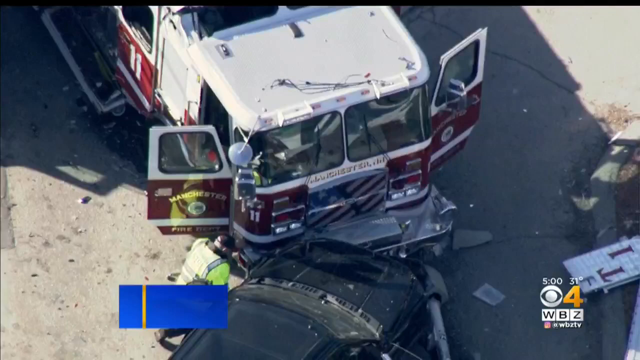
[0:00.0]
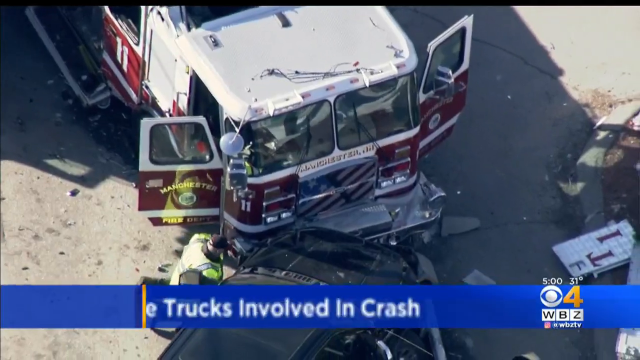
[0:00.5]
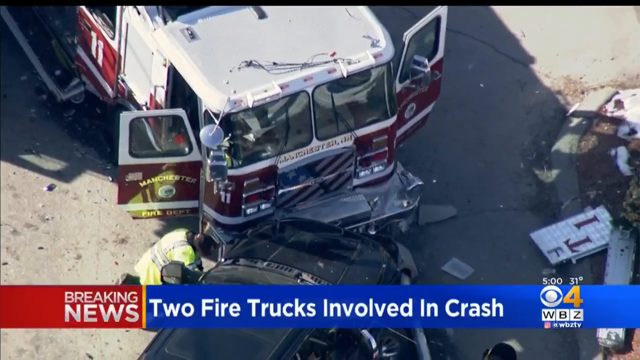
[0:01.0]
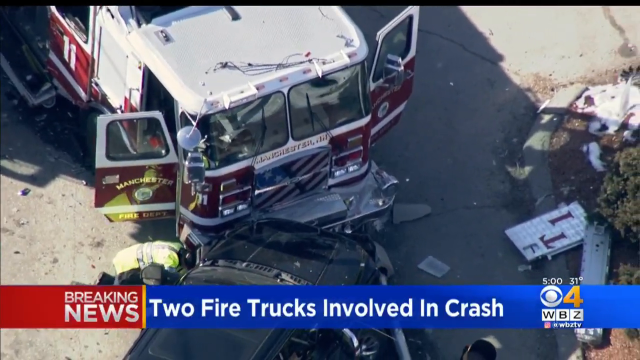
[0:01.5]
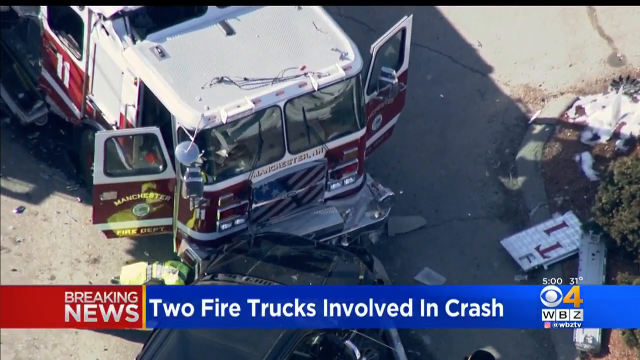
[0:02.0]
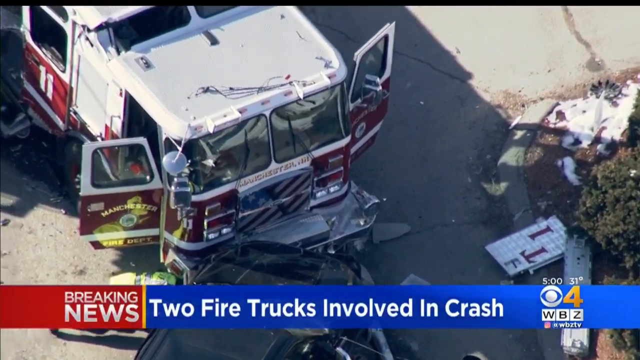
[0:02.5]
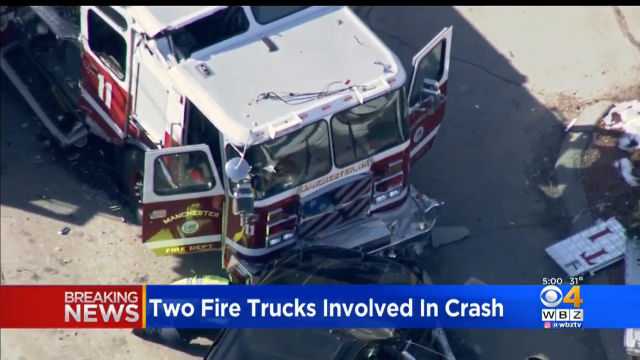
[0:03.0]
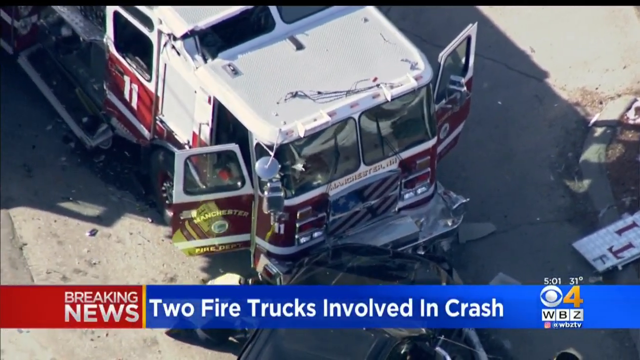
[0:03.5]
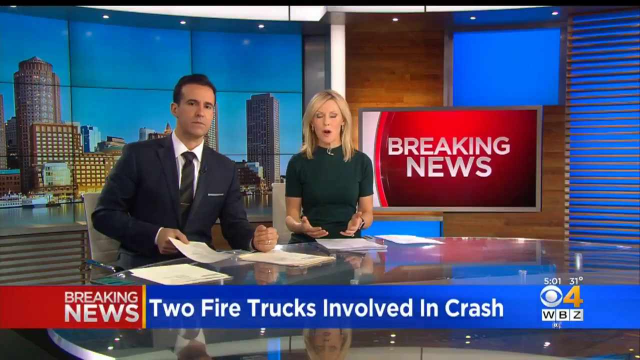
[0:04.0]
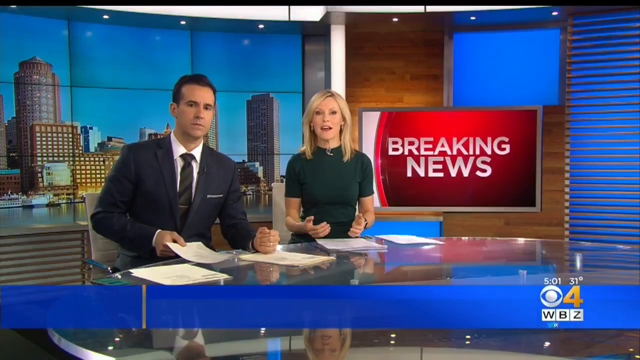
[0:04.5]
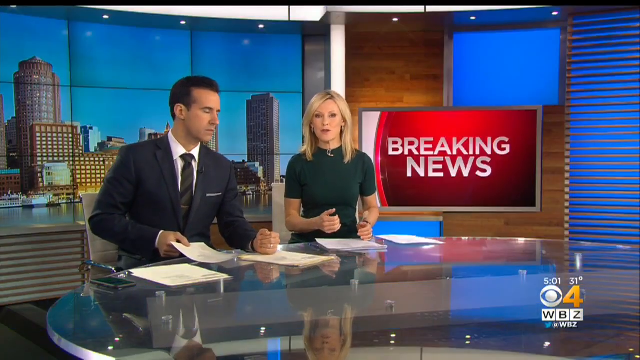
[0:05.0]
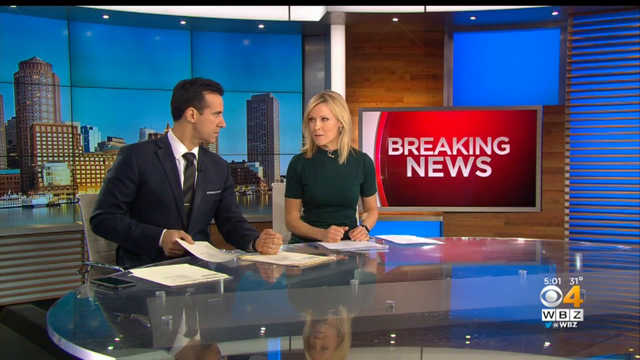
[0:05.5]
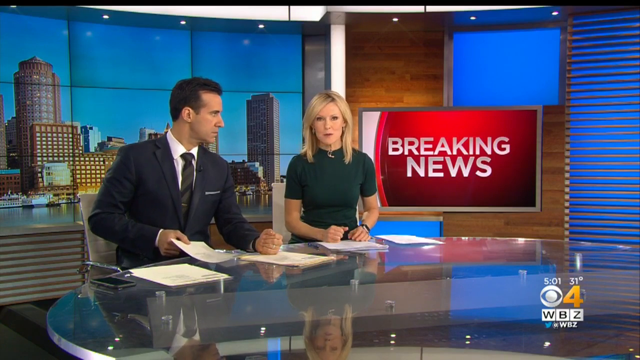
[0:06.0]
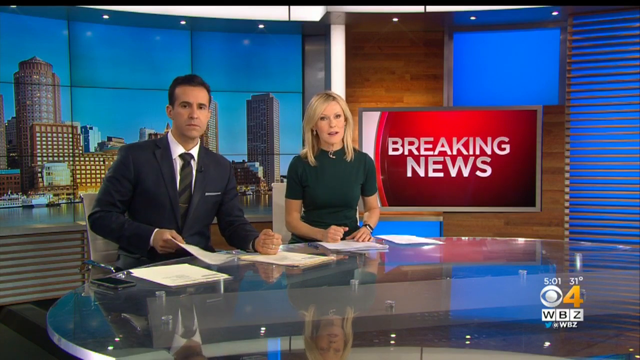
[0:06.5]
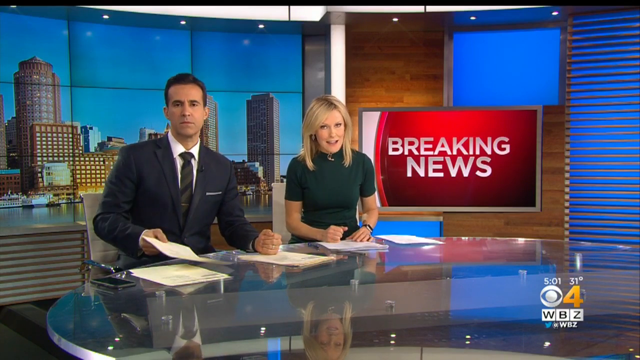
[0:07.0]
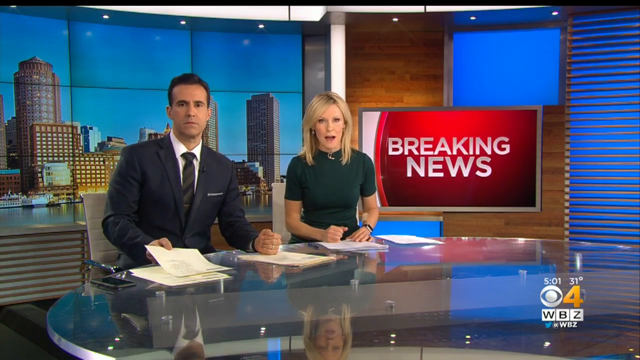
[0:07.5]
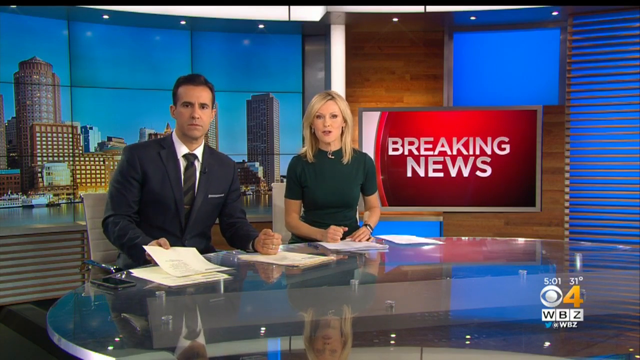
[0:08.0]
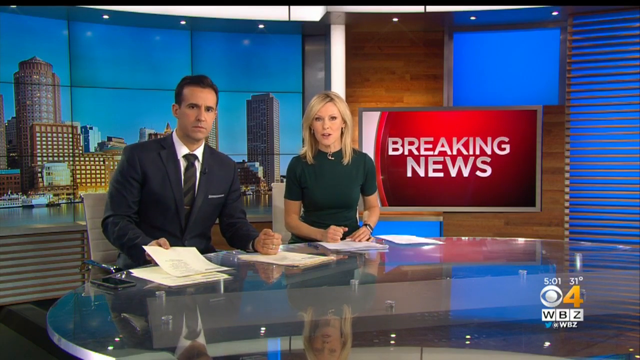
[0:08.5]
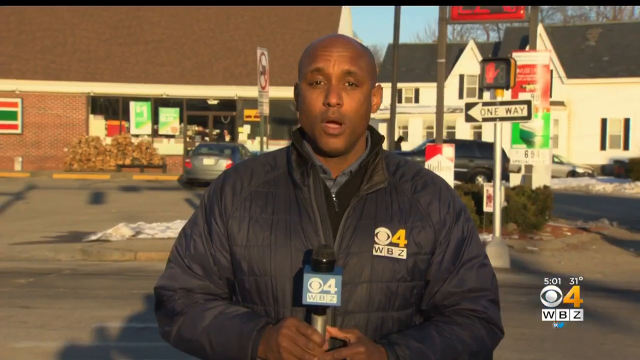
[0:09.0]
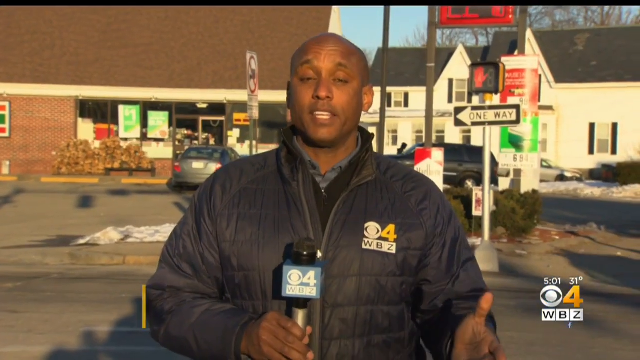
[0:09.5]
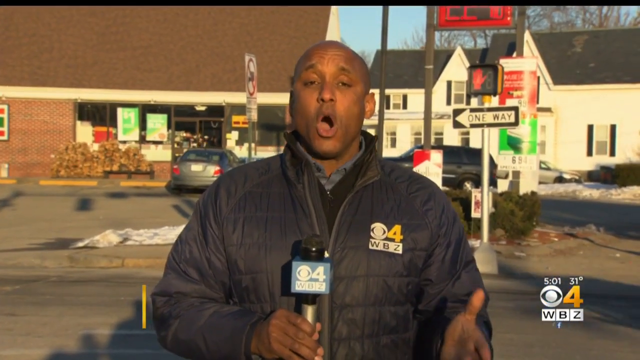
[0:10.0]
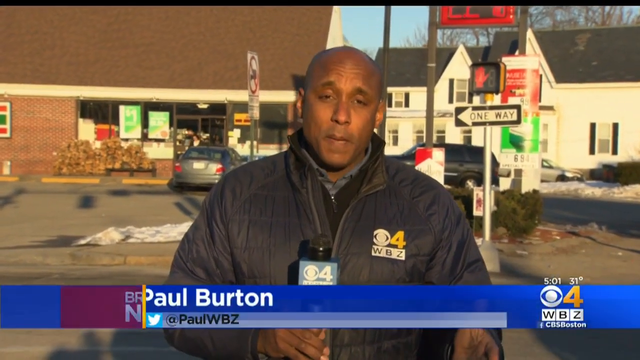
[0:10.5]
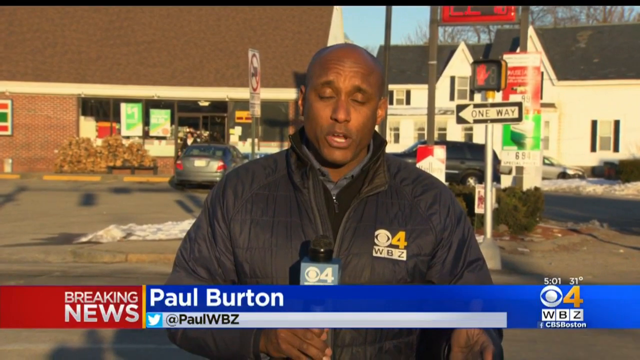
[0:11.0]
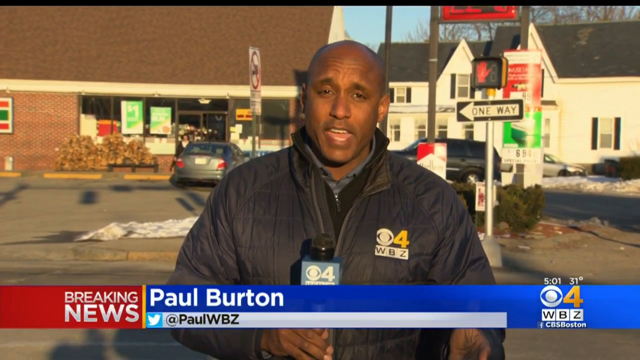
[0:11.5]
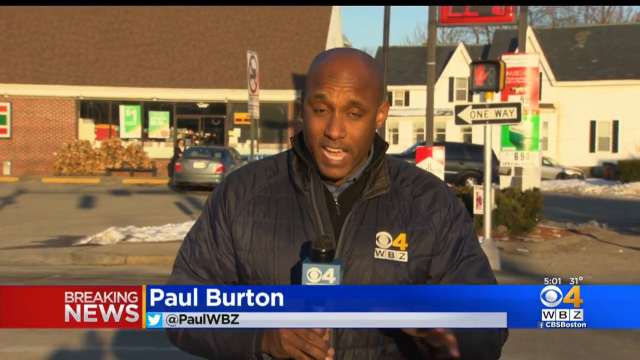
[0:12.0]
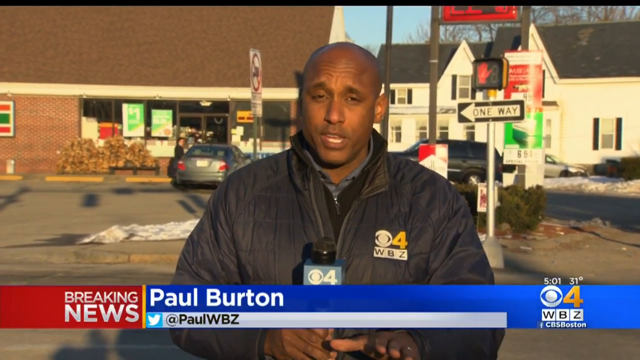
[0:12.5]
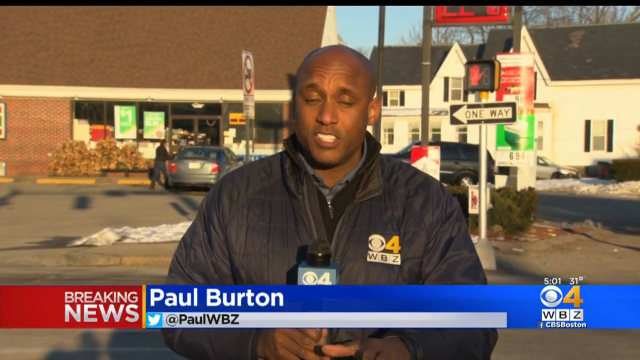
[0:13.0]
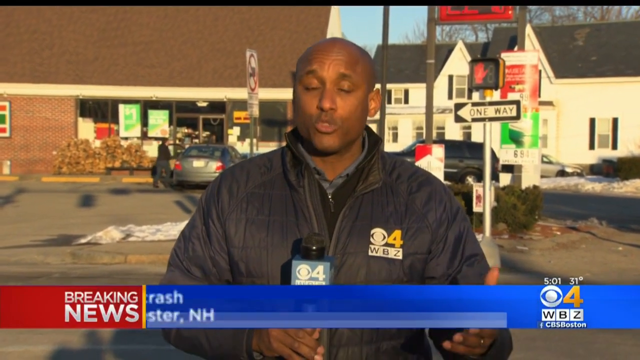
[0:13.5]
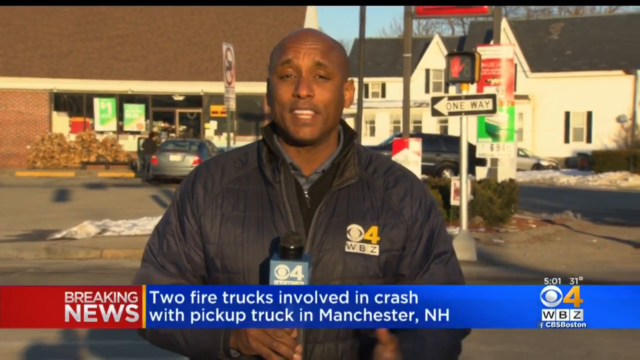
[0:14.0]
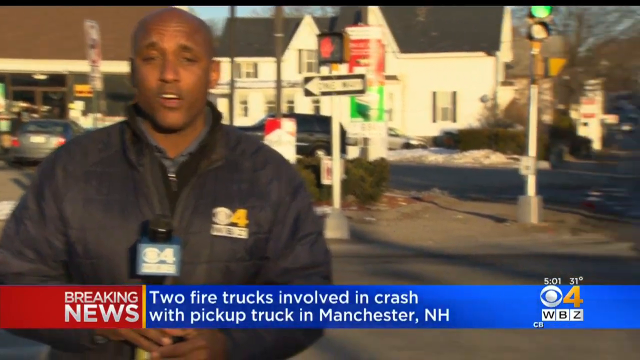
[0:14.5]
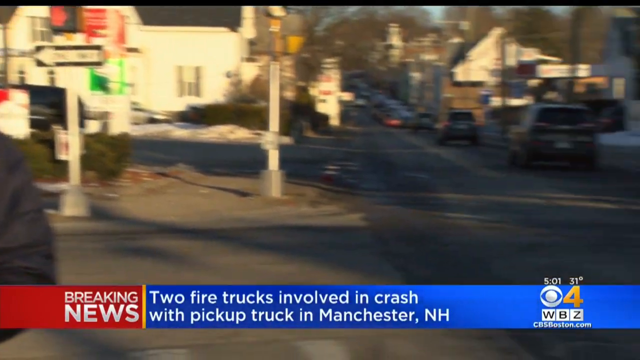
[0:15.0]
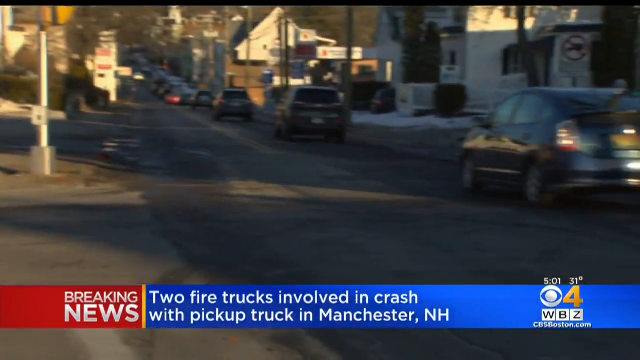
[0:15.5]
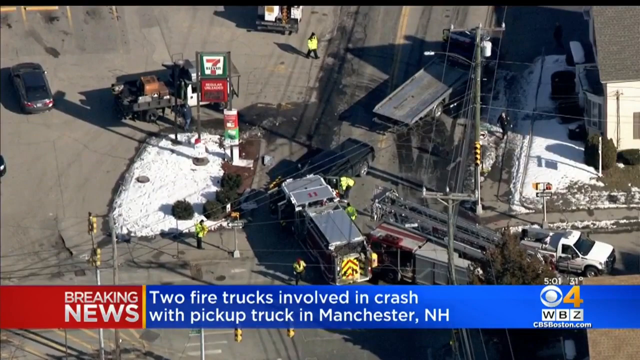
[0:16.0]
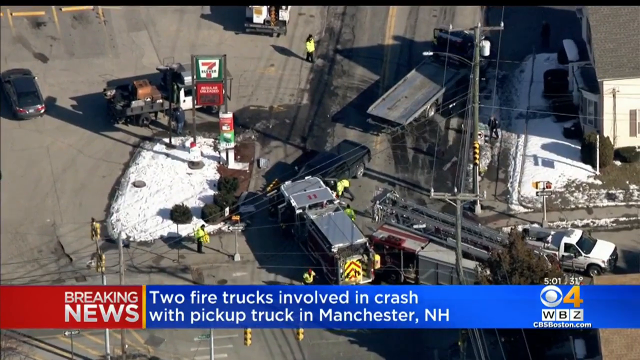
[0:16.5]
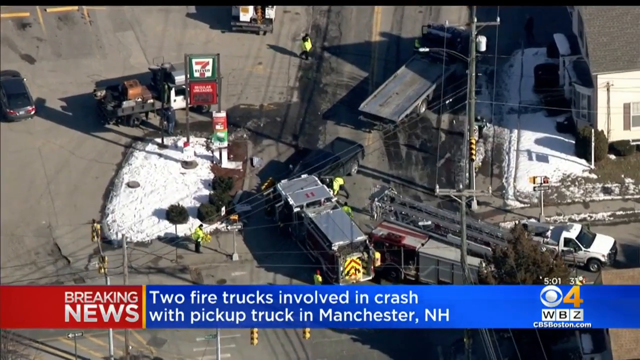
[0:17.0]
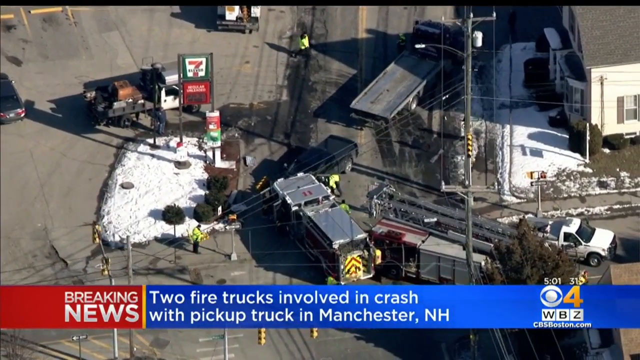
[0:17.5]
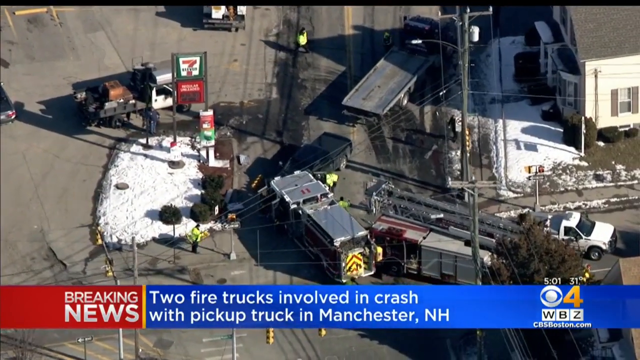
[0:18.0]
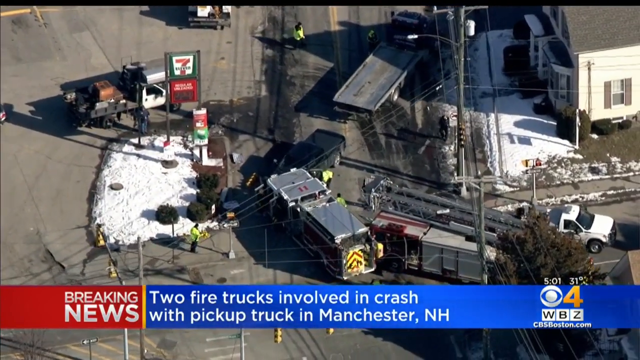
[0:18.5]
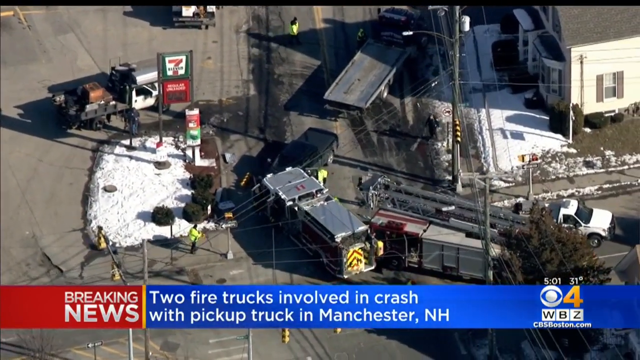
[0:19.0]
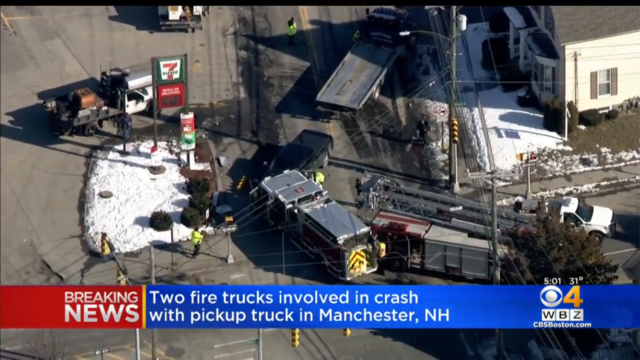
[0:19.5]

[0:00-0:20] In this newscast, an aerial view, possibly from a helicopter, shows the front of a firetruck with both the passenger and driver side doors open; the words "Manchester Fire Department" are visible on one of the doors. The view moves slightly. The shot cuts to two news anchors at a desk, looking at the camera. A man on the left wears a dark blue sports coat, a white shirt and a dark gray tie, and a blonde woman wears a black dress. To their right, a monitor says "Breaking news", and city buildings are visible behind them. Text below them reads "Breaking news, two fire trucks involved in crash". The broadcast is on WBZ. The shot cuts to a Black newscaster on the street talking into a microphone, wearing a dark blue jacket that says "4 WBZ". The camera pans over and cuts to a different shot of the fire trucks involved in the crash.